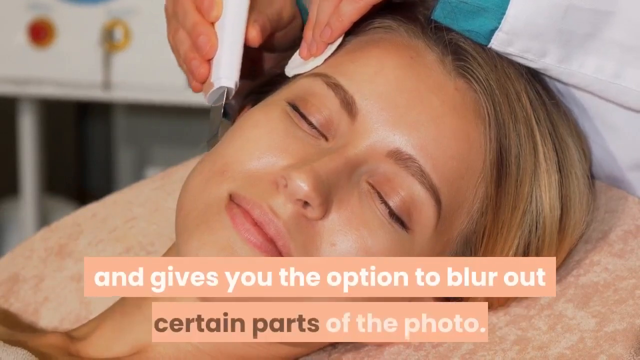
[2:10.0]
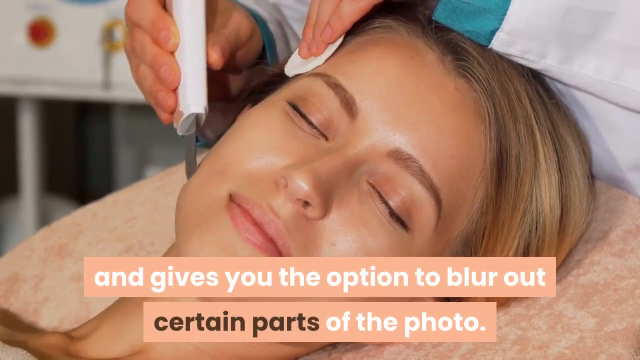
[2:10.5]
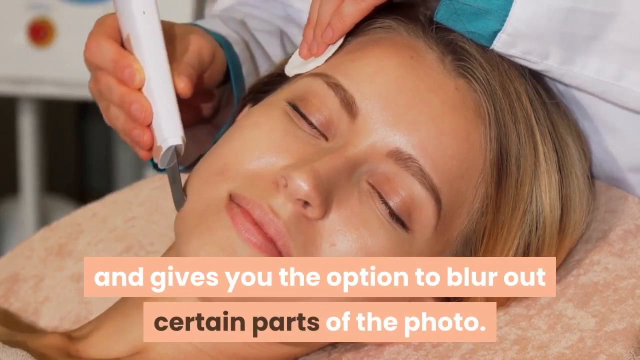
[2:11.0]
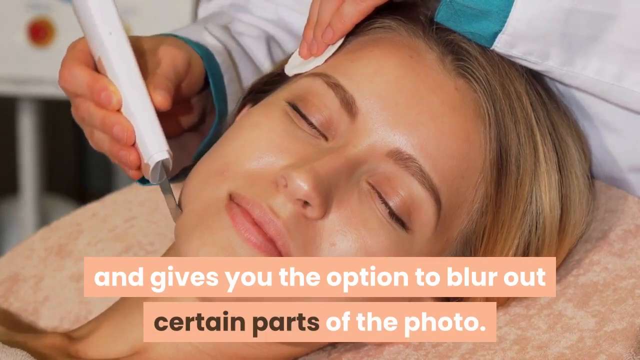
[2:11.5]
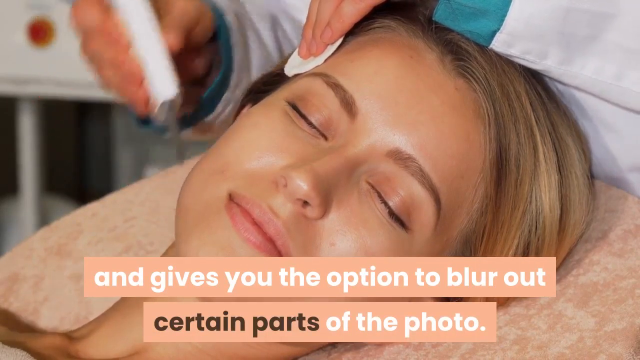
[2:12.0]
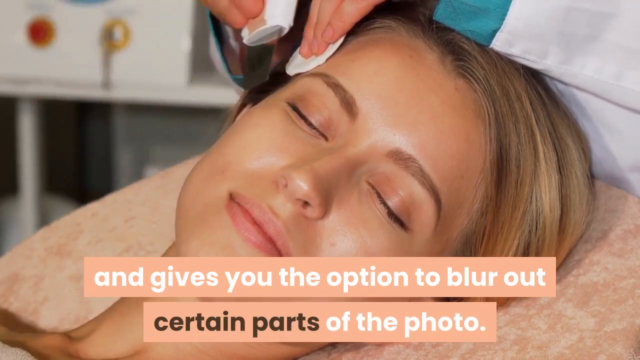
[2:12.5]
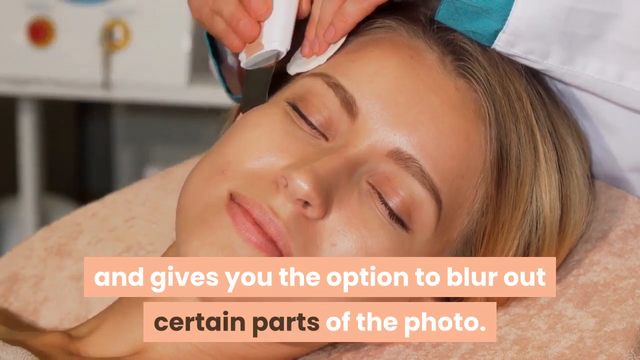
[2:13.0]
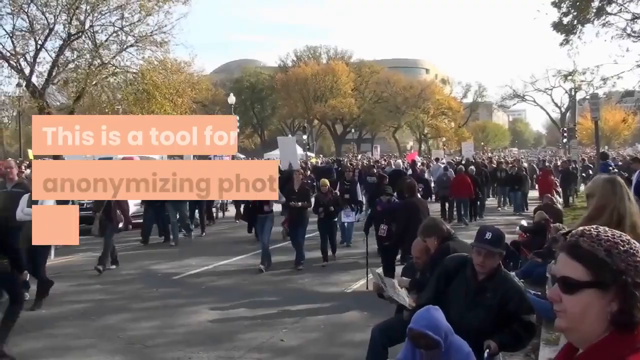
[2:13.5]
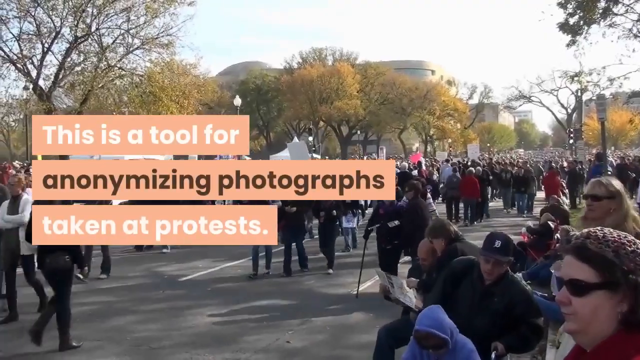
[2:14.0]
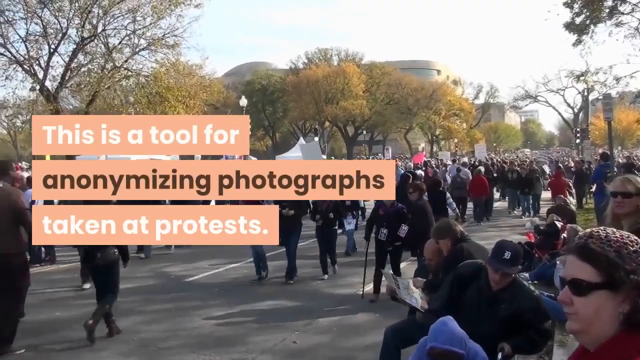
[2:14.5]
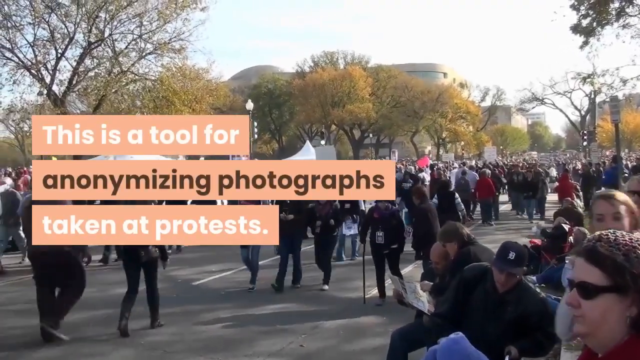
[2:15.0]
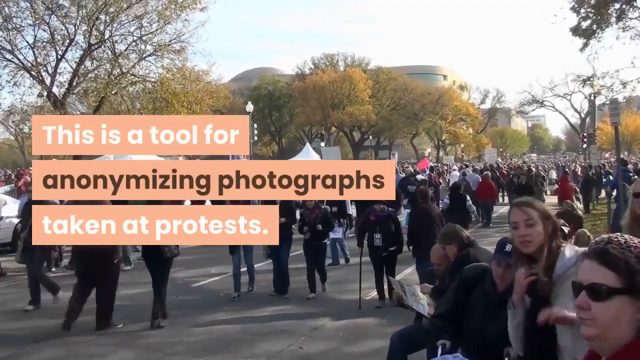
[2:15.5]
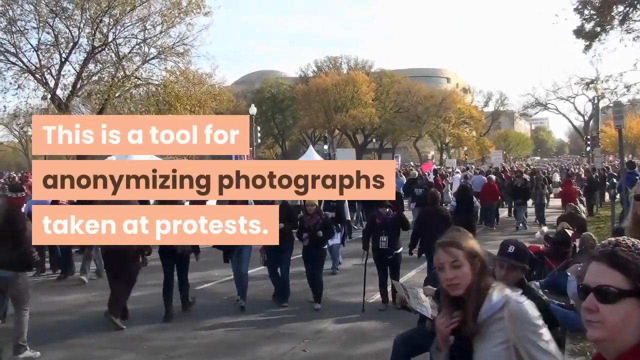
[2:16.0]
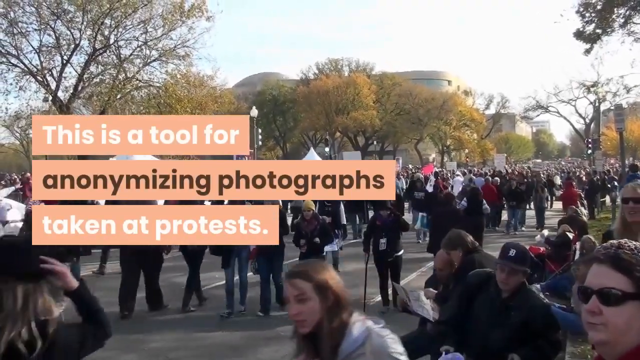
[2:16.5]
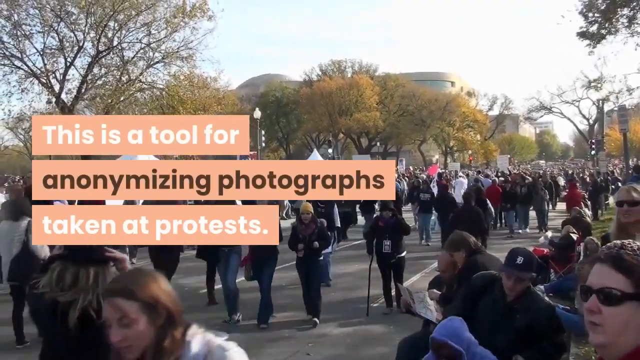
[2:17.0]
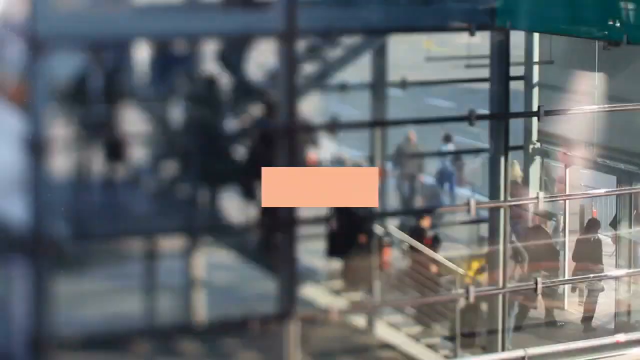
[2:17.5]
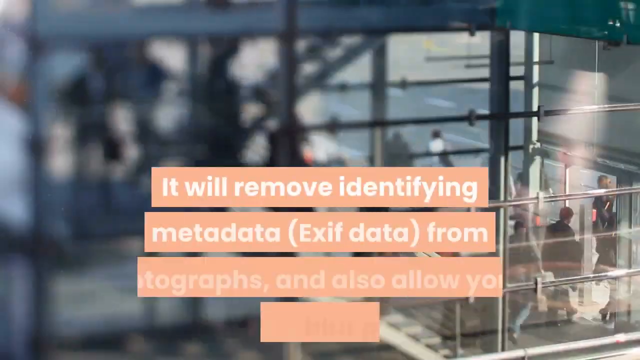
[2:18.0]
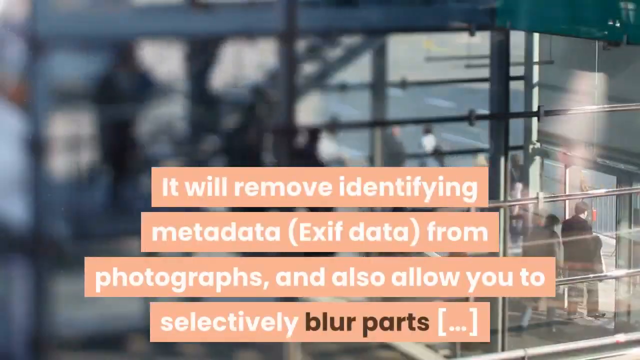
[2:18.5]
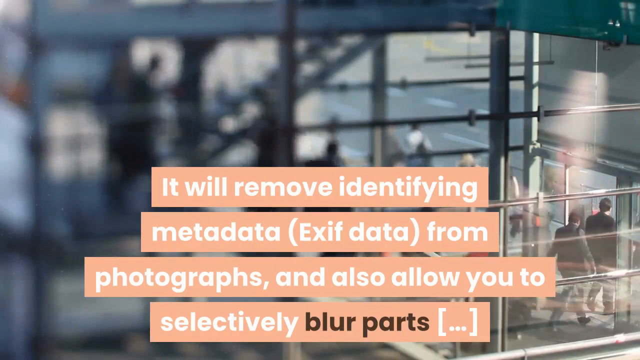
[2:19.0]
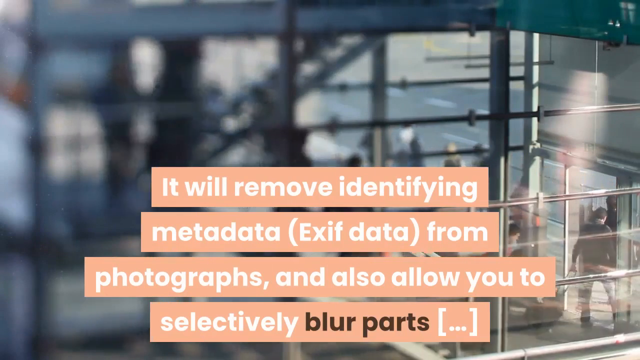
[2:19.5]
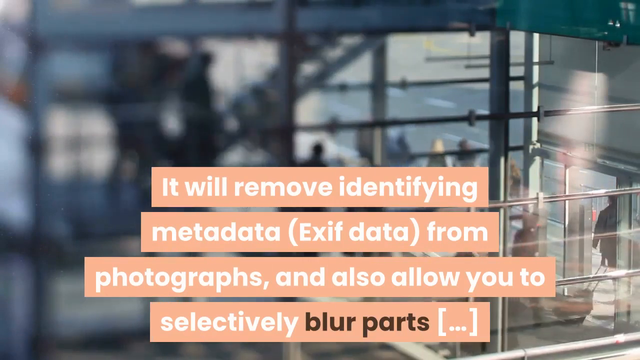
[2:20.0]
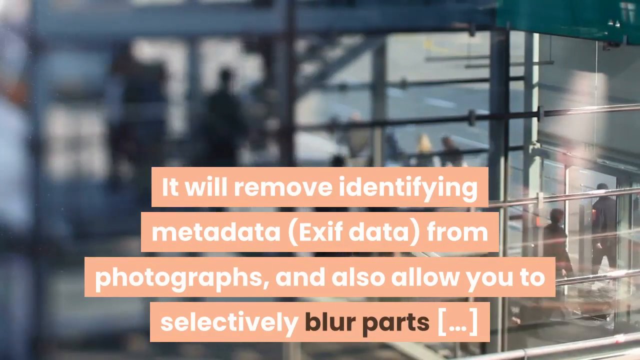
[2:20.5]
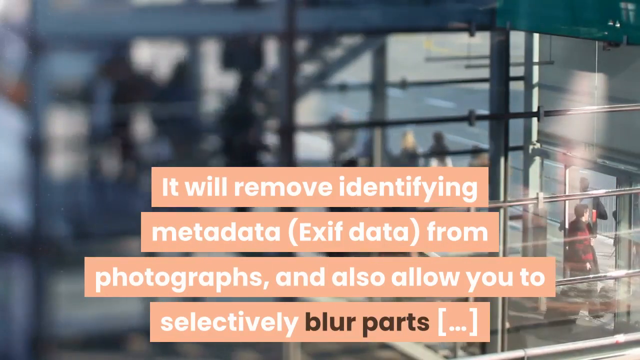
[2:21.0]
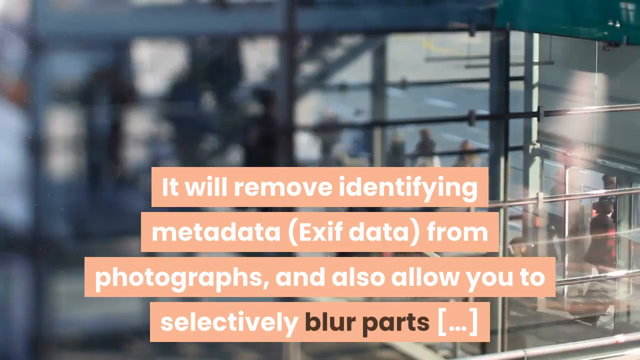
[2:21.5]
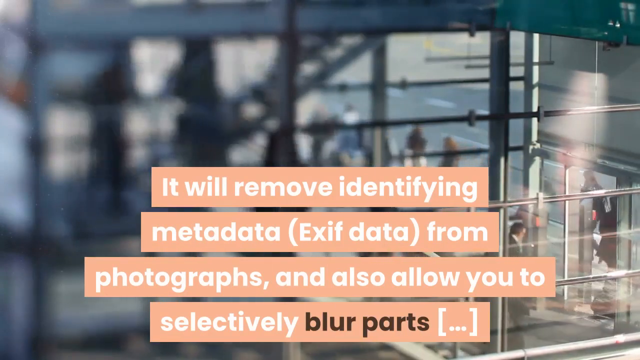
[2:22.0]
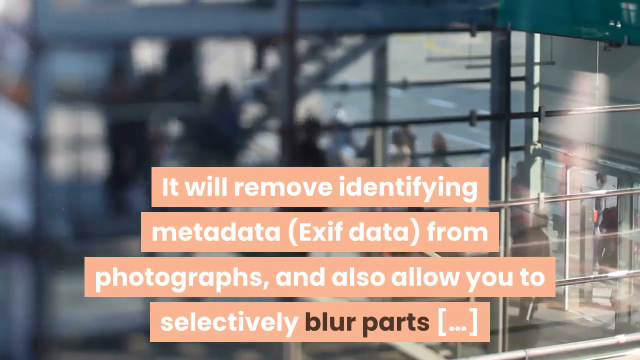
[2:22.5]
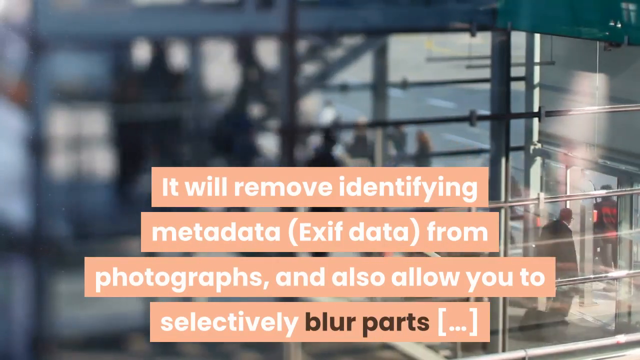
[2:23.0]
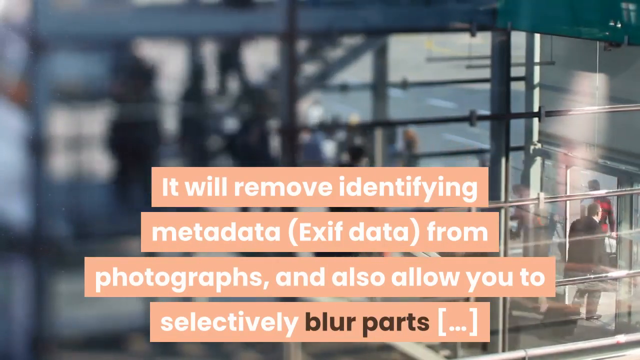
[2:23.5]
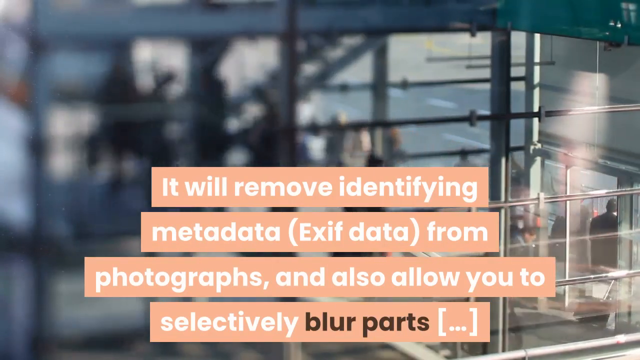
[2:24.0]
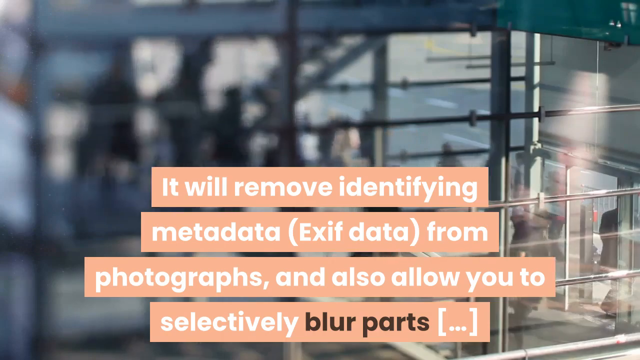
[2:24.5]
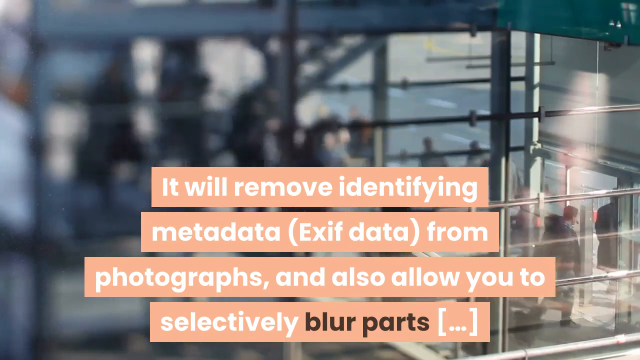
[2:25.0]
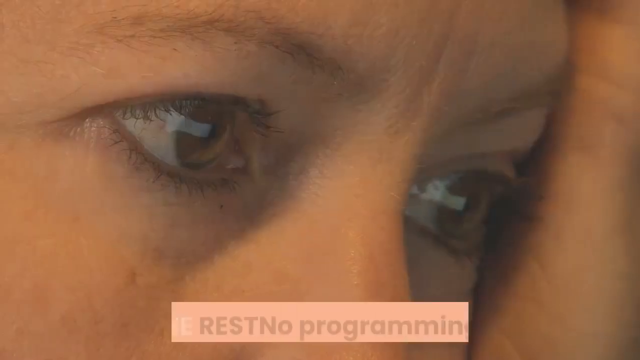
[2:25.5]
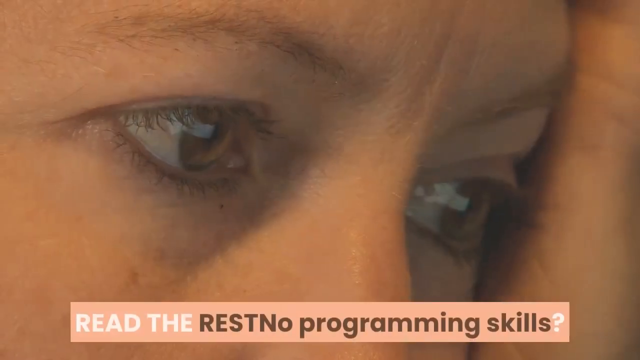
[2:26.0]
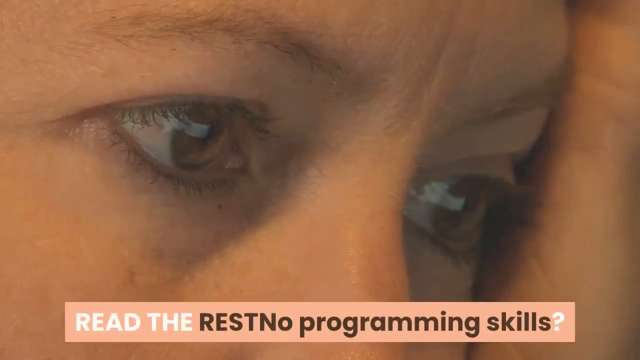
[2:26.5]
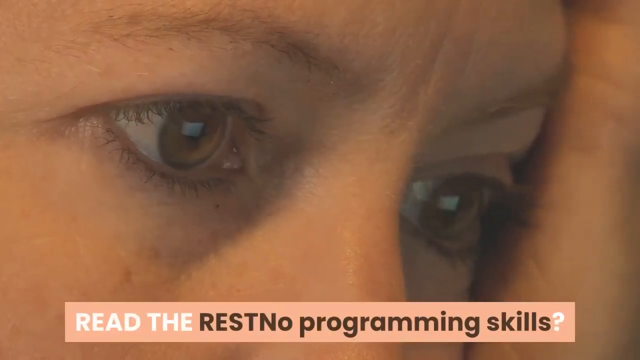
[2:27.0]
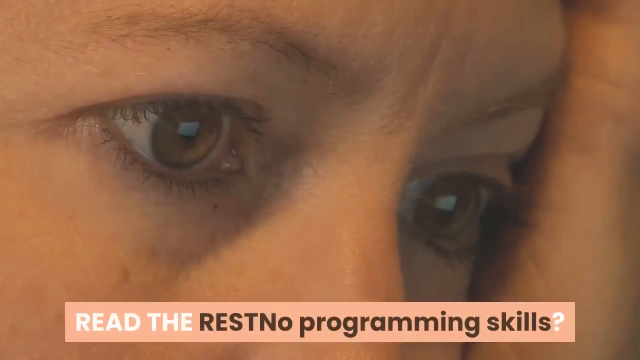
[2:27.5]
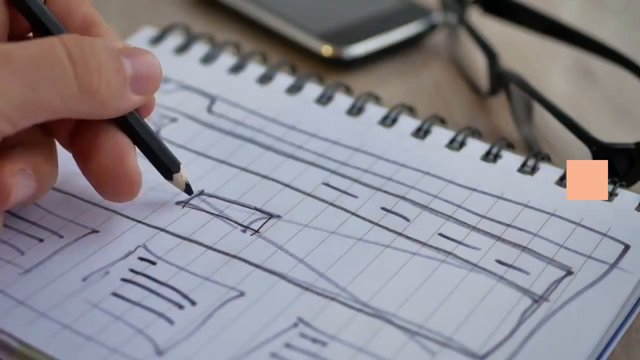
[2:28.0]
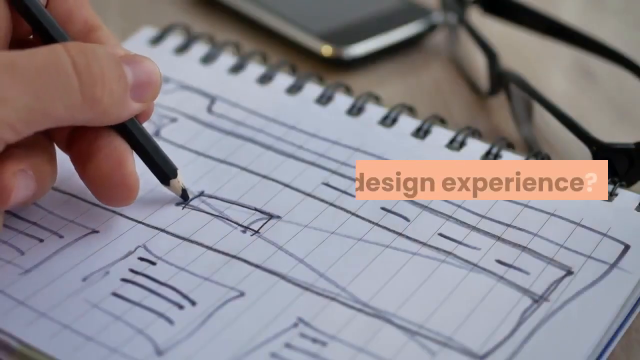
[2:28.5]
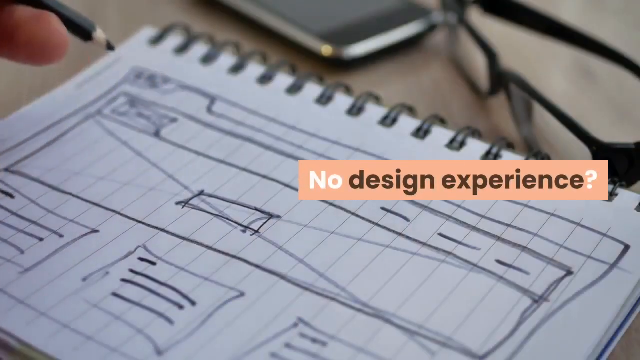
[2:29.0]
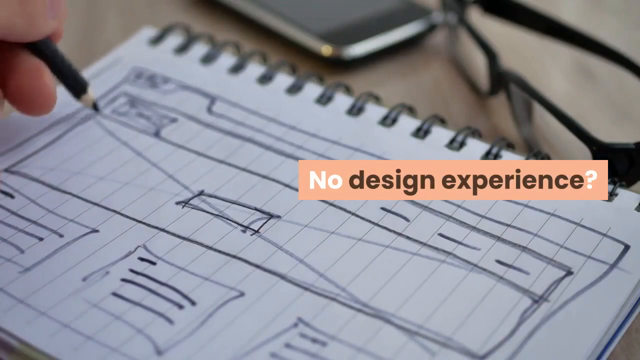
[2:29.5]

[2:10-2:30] The woman is still on the massage-style chair or bed, lying down with her eyes closed. A pair of hands appears above her head, applying an unclear tool to her face: the left hand holds a cotton pad on her forehead while a tool in the right hand works down her face; the tool appears to have a sharp blade. The text continues, describing the option to blur out certain parts of the photo: "This is a tool for anonymising photographs taken at protests." The background then shows what appears to be a busy protest in a street with many trees and people strewn about the roads. The text continues: "it will remove identifying metadata, exif data from photographs and also allow you to selectively blur parts." Next, a hand holding a pencil draws what appears to be a sketch on lined paper in a notebook, and the text reads "No design experience?"